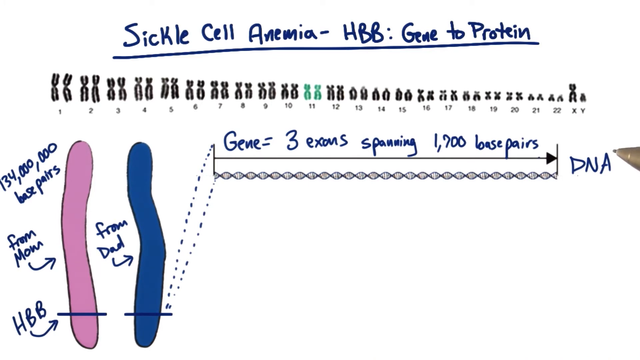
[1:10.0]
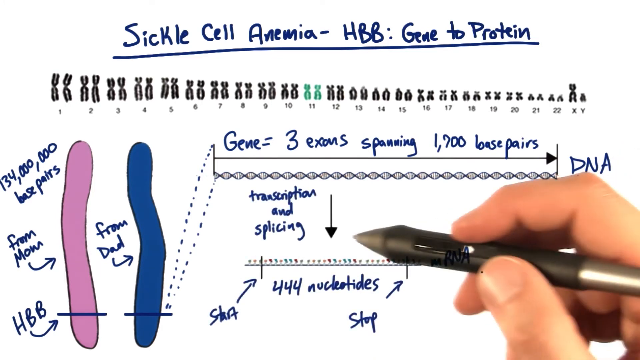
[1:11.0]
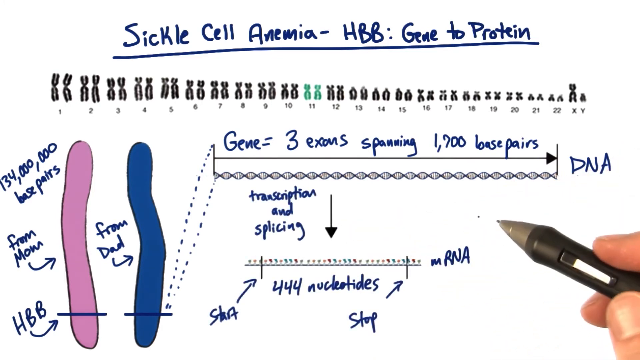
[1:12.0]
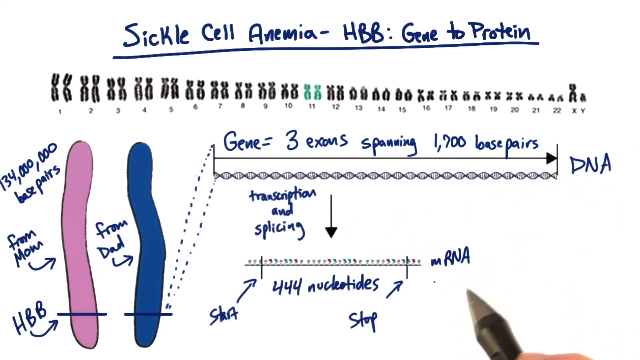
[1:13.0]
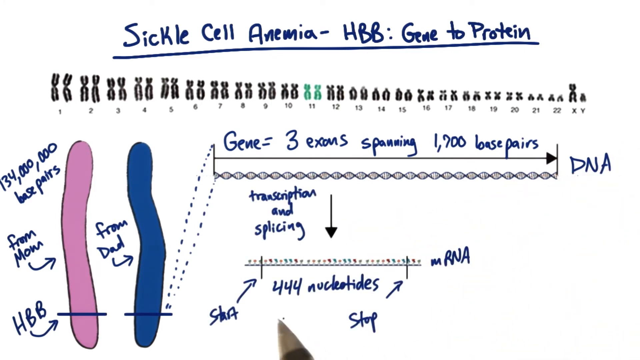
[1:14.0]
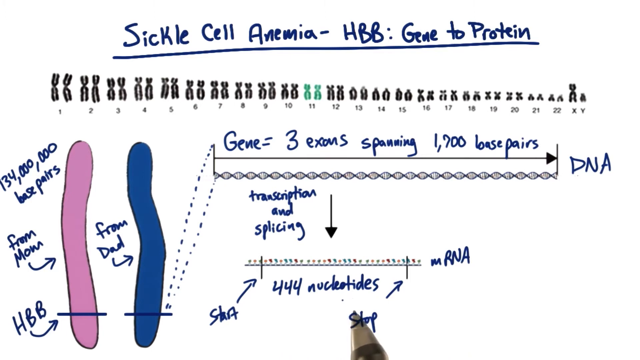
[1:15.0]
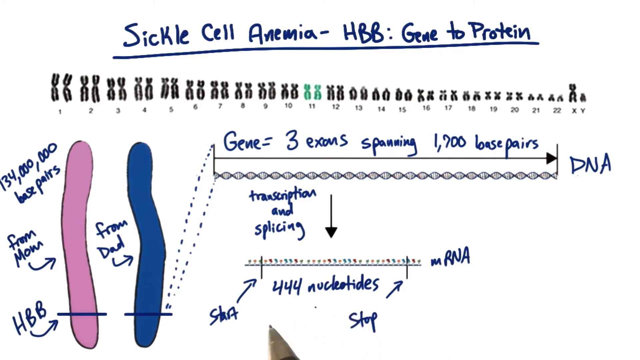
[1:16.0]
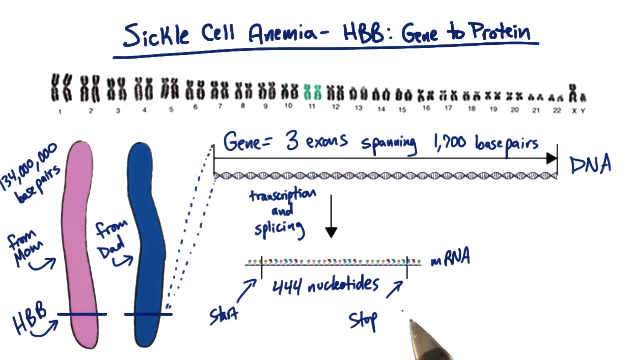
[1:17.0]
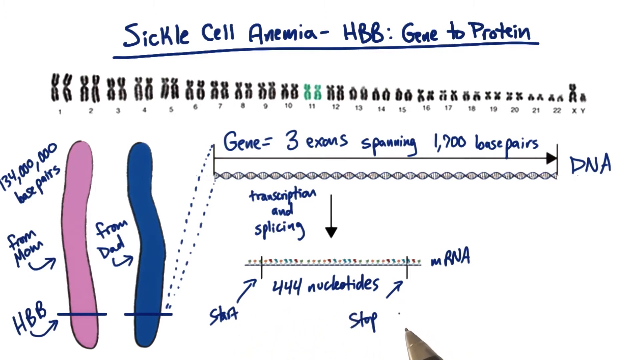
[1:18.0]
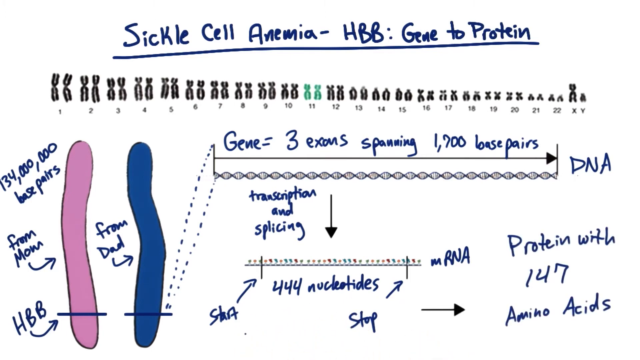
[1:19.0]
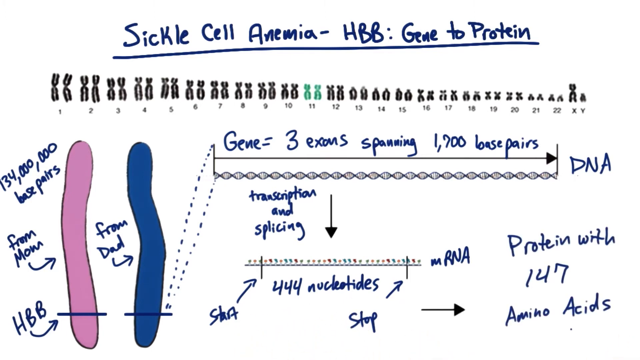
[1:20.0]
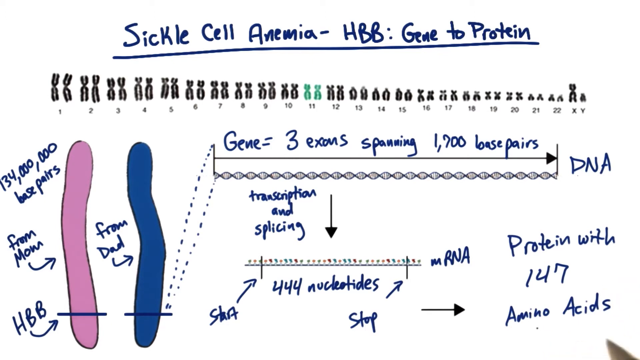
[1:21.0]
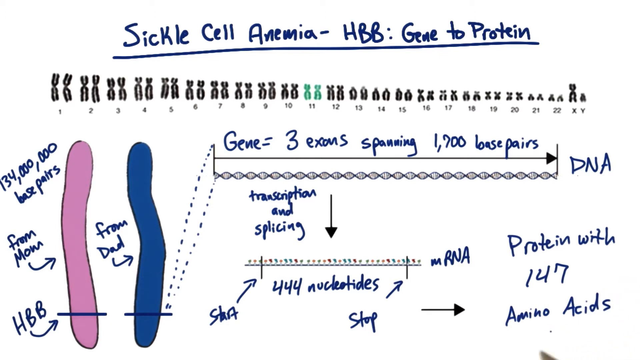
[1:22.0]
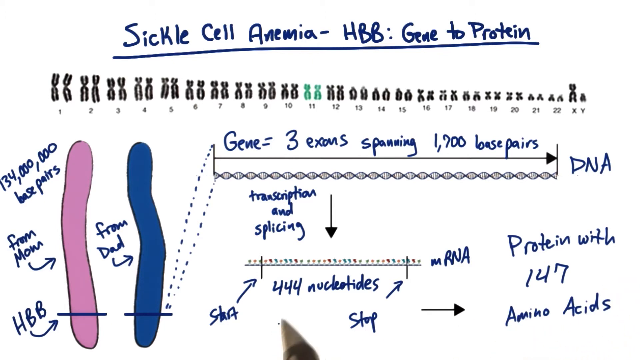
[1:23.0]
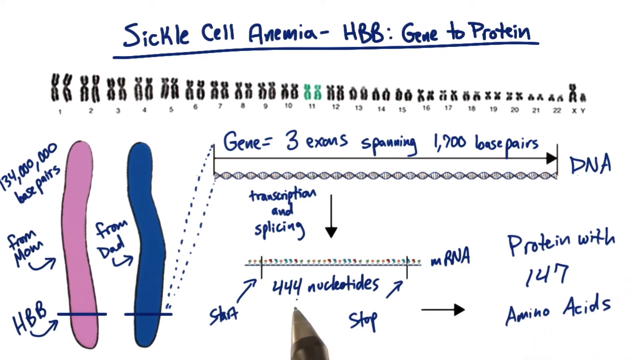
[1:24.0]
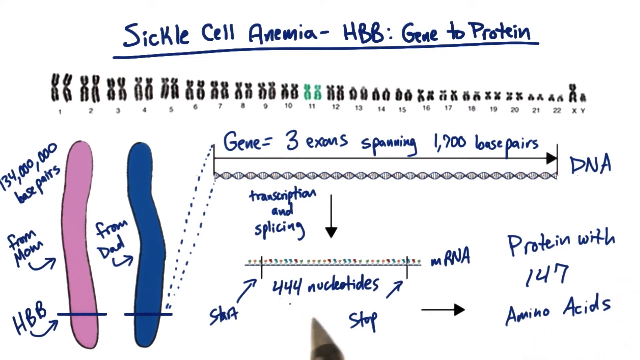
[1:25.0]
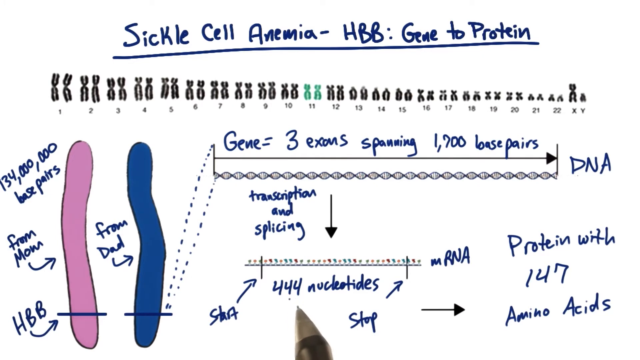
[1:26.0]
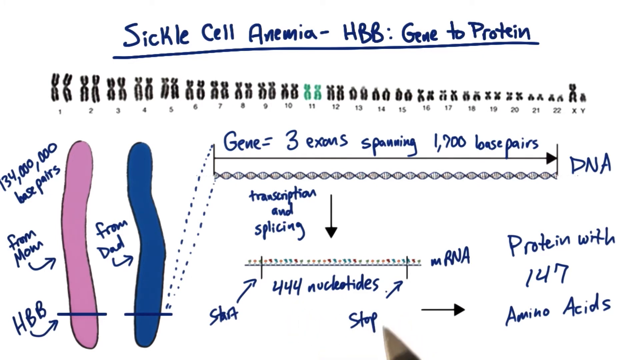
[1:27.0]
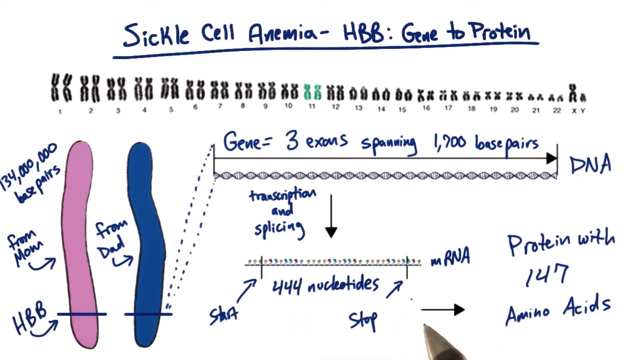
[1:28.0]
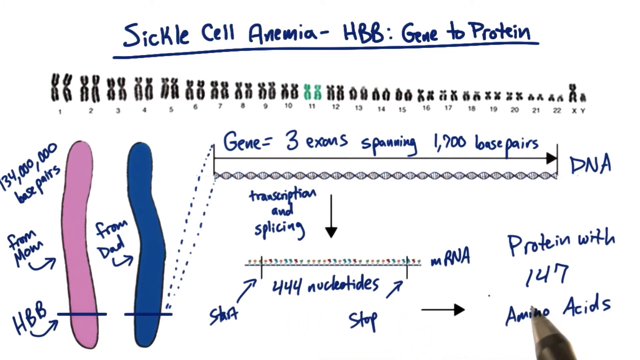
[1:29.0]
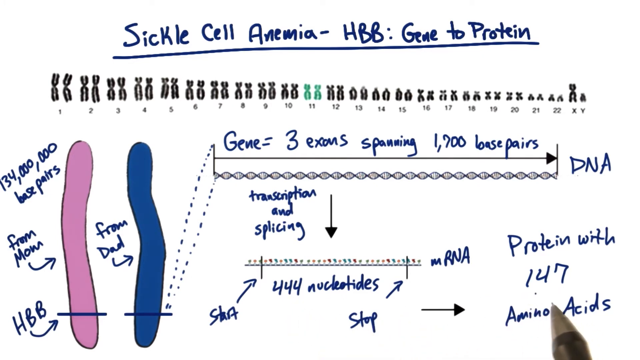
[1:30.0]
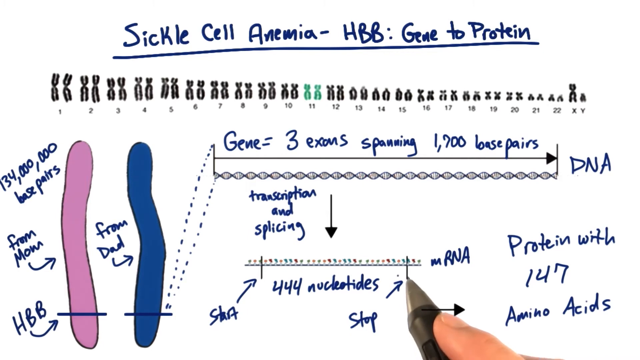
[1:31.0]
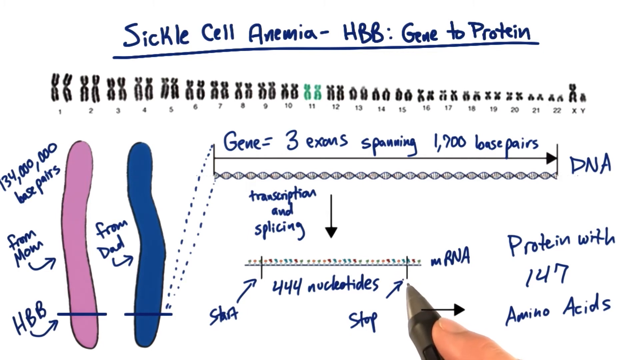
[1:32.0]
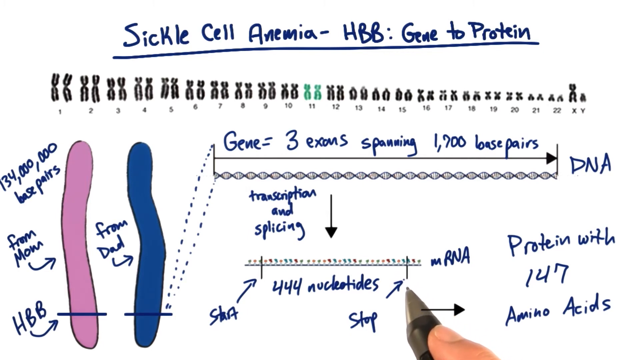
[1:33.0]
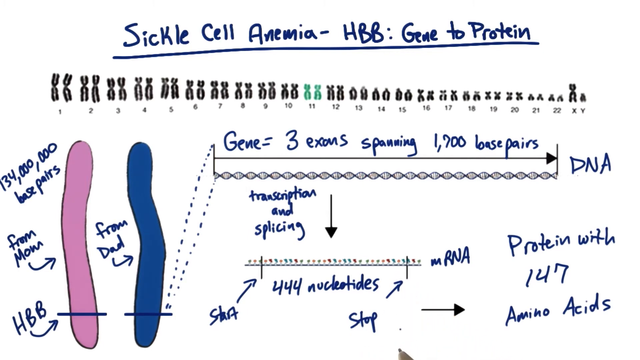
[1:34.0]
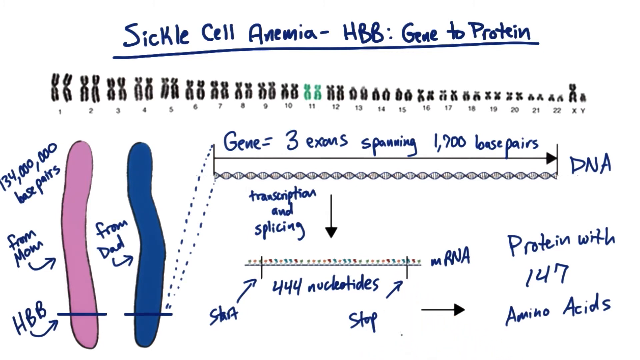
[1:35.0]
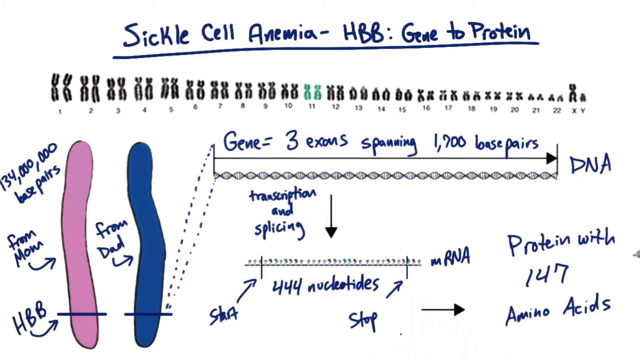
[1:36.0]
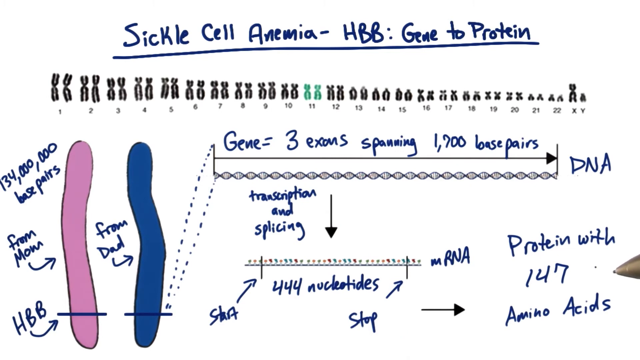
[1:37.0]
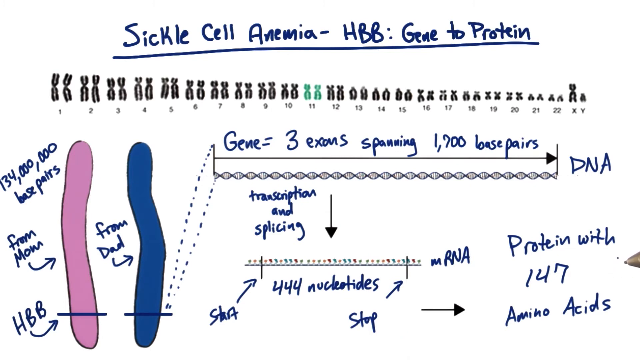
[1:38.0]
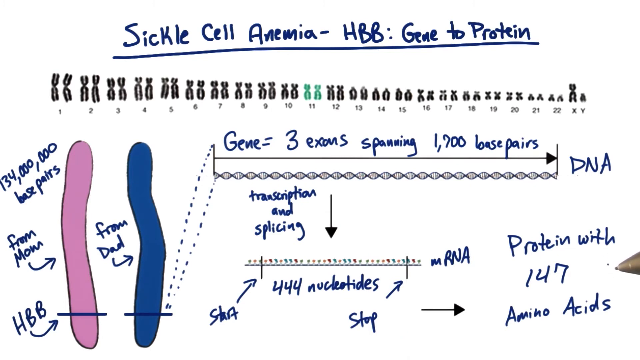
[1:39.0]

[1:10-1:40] A new line labeled mRNA appears below the DNA line, with a downward arrow labeled "transcription and splicing." The mRNA line has a start and a stop, and between them it reads "444 nucleotides." The host hovers over mRNA and 444 nucleotides a few times. Another arrow appears pointing to the right, toward text that reads "protein with 147 amino acids." He hovers over that section with his digital pen, then over different spots on the mRNA line, then back to the protein section, moving back and forth. Finally he places his pen near the bottom right of the slide.